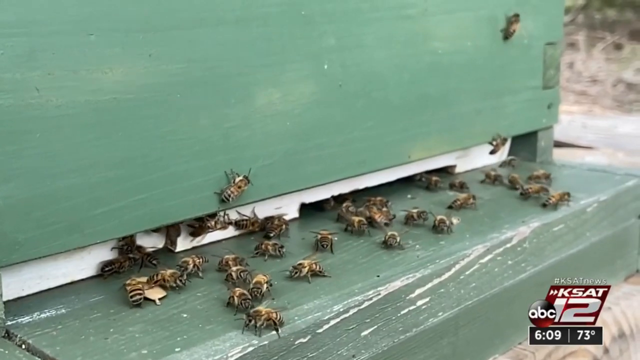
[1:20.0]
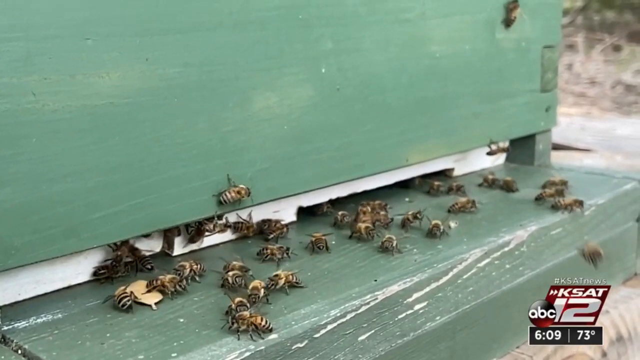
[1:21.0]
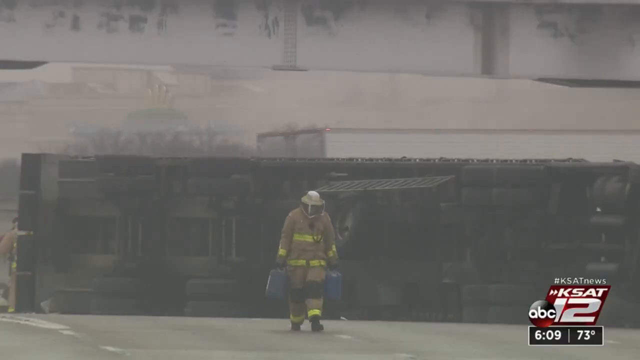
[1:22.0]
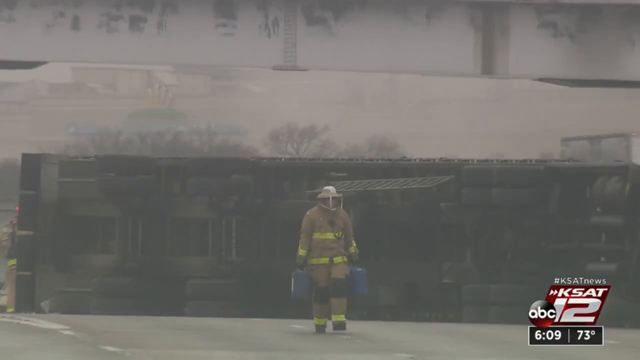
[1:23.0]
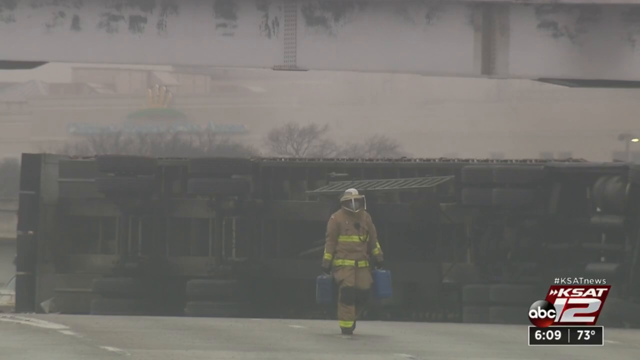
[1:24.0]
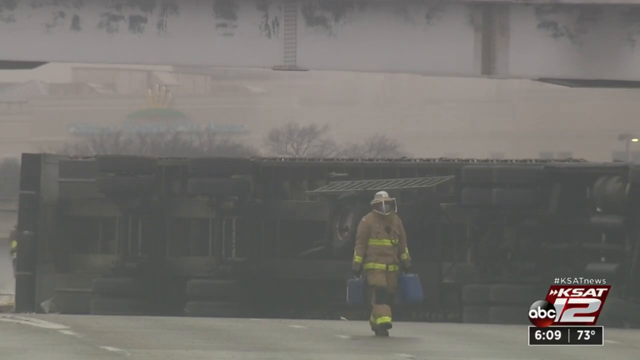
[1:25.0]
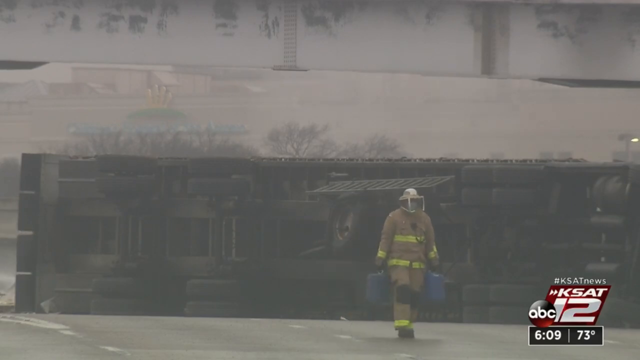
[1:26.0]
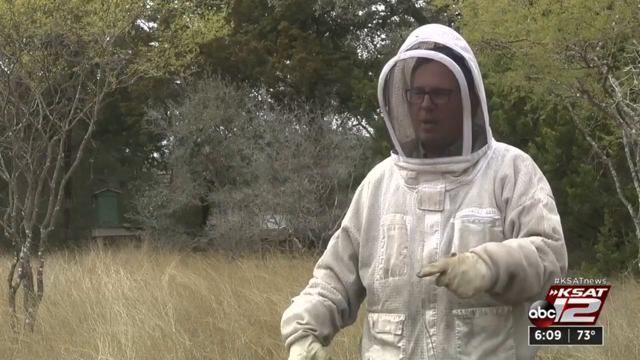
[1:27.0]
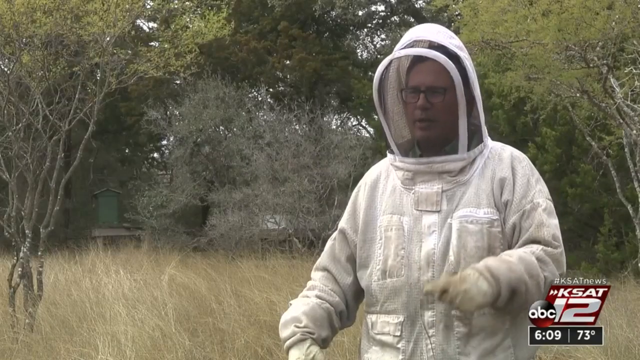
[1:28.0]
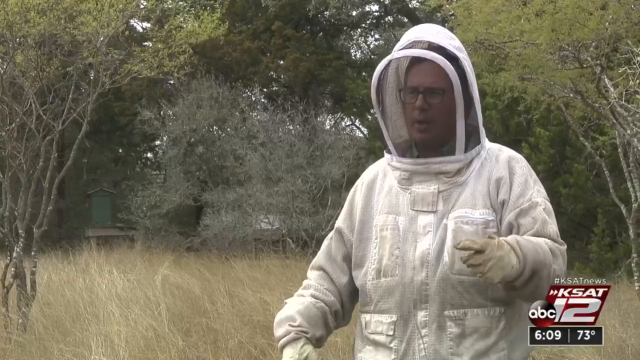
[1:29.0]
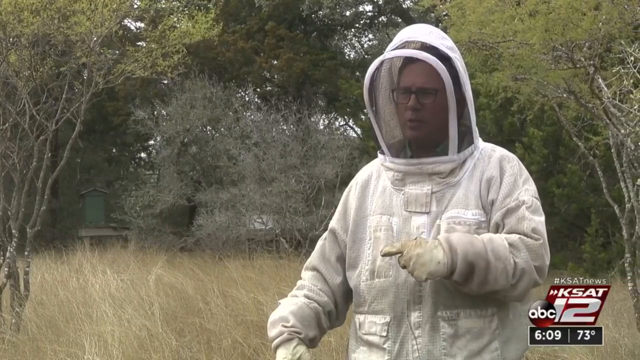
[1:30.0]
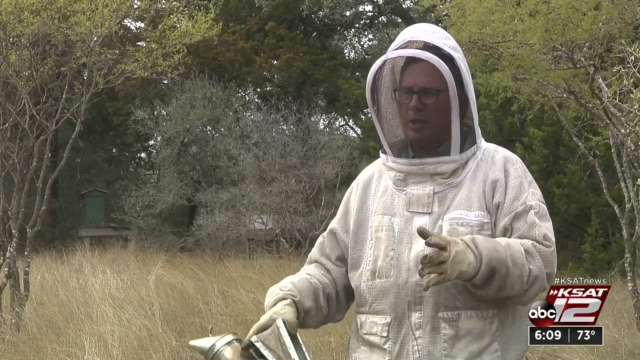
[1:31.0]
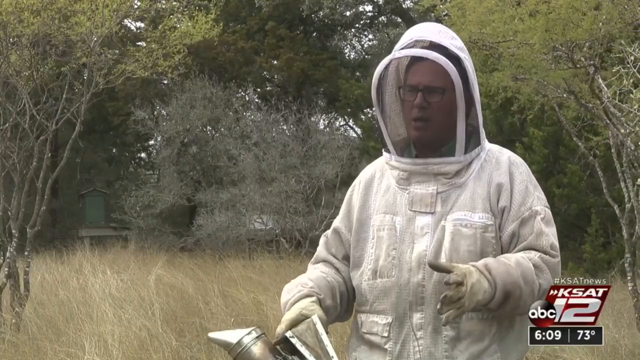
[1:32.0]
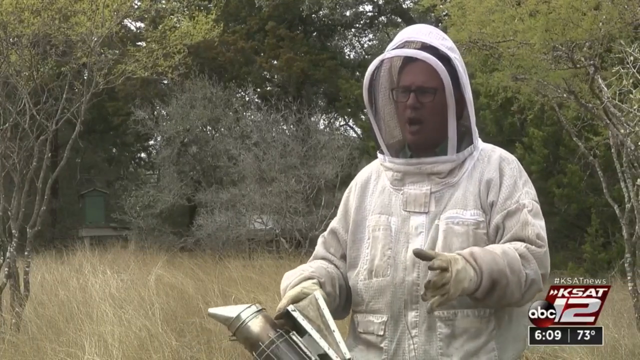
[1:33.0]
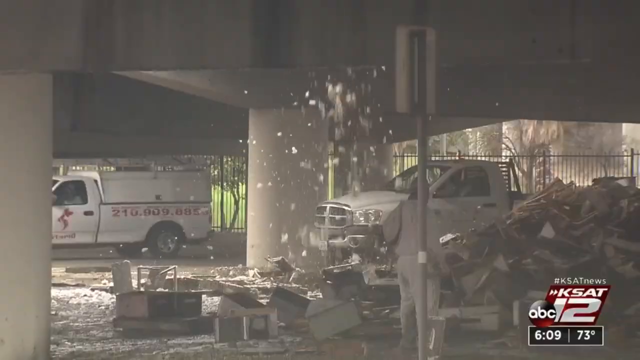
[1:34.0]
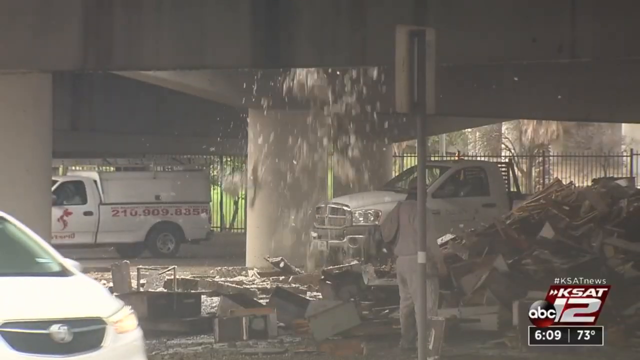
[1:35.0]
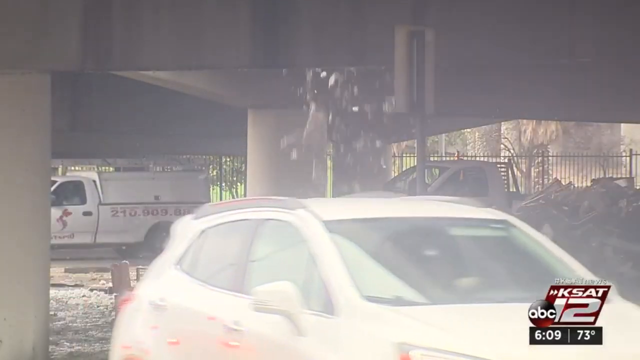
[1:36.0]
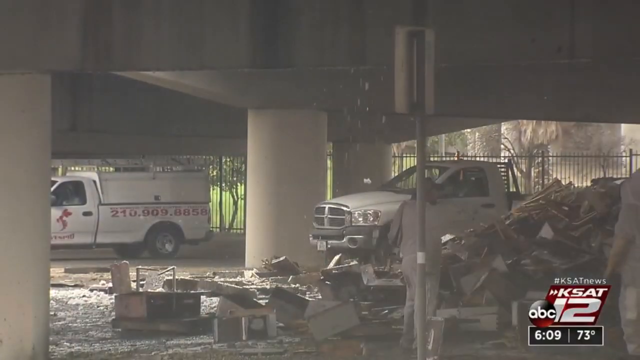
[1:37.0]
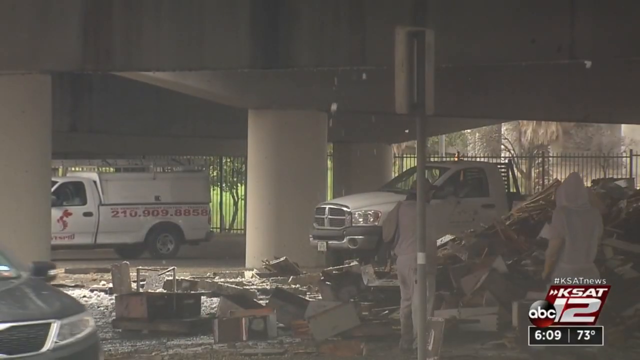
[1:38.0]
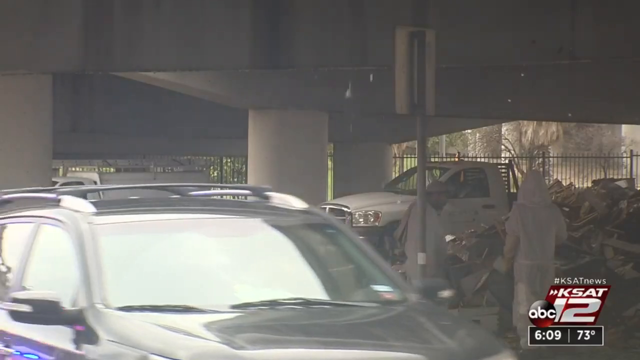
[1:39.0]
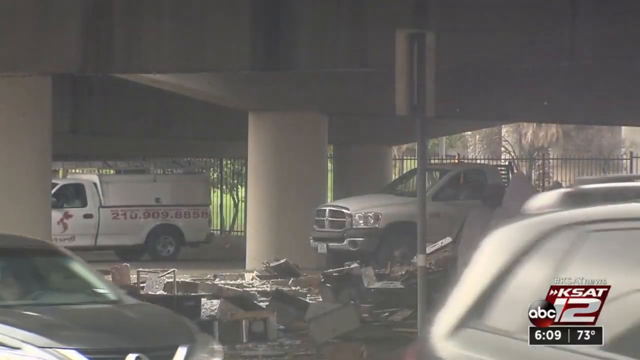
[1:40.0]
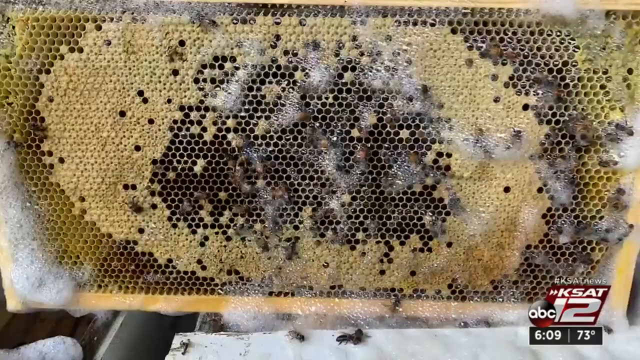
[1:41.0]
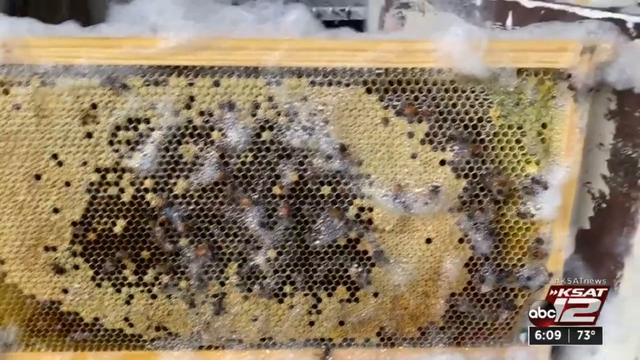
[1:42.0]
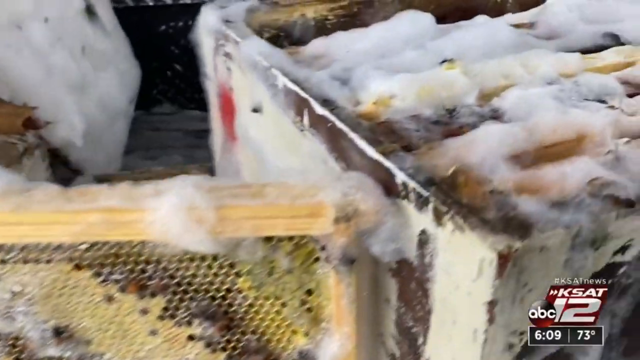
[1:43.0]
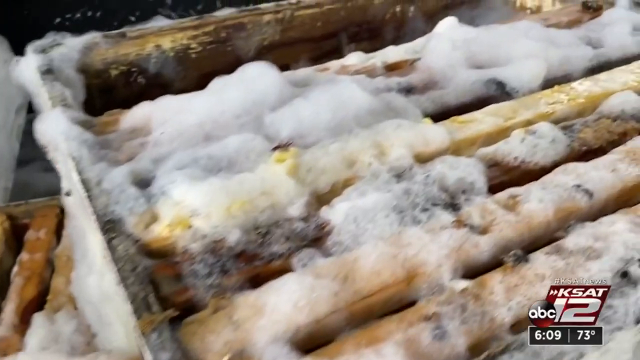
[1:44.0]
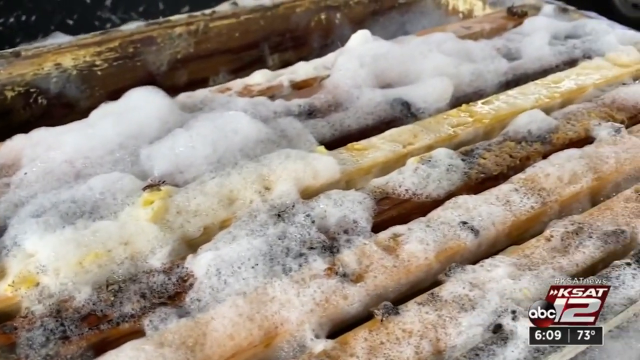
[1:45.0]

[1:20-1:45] Some bees are outside a green box that has an entrance in and out for the bees. The scene switches to underneath the highway, where a fireman walks holding two hand cases, while cars run on the highway above. Next, a man in a protective suit and mask talks with hand gestures, with trees behind him. The scene switches back under the highway, showing some trucks and a lot of broken parts falling from above the highway, with workers in protective gear walking around and cars running in front. Finally, the bee boxes are shown with a lot of foam on the wax screen; there are eight panels in the bee box, one of which is out, and they all have a lot of foam on them.